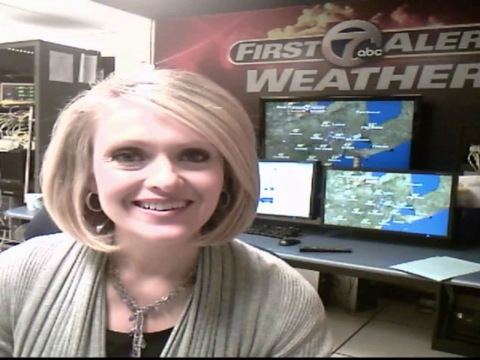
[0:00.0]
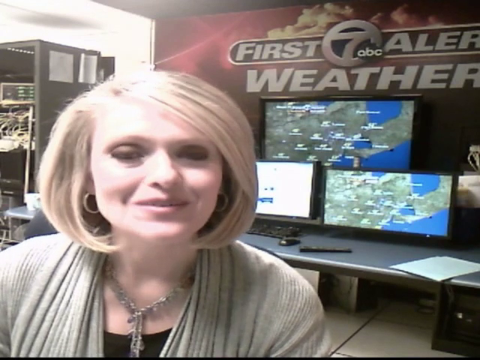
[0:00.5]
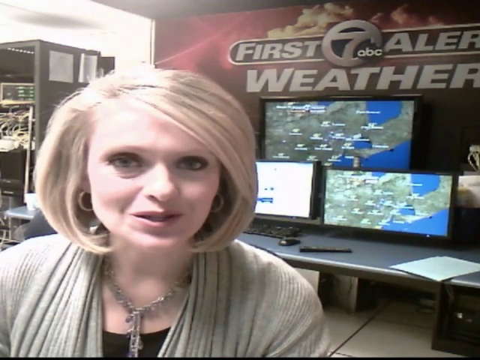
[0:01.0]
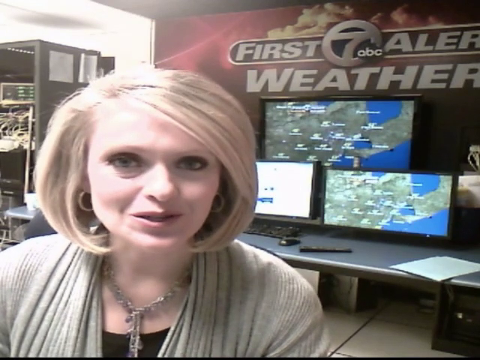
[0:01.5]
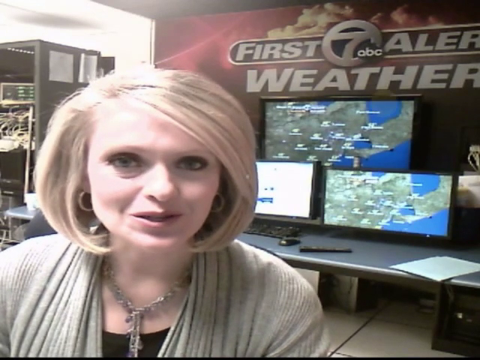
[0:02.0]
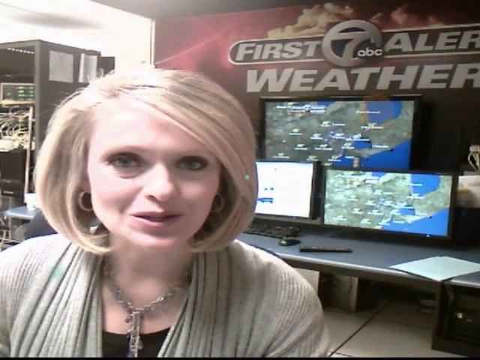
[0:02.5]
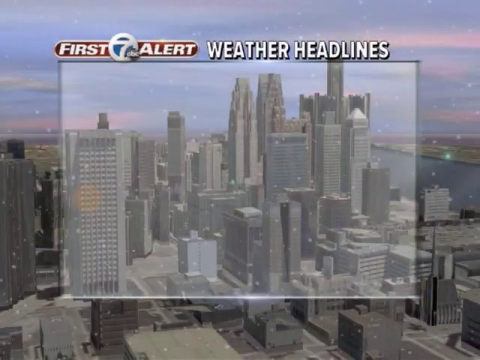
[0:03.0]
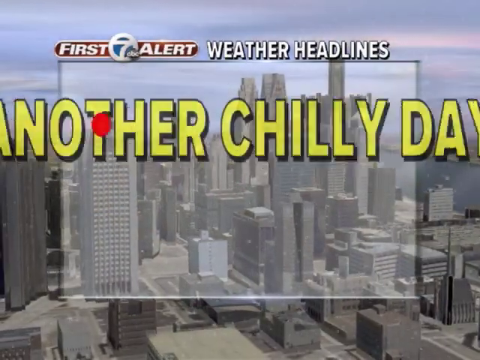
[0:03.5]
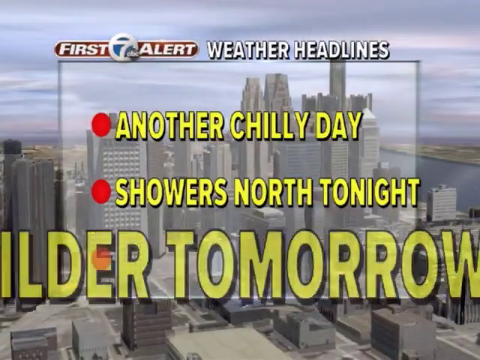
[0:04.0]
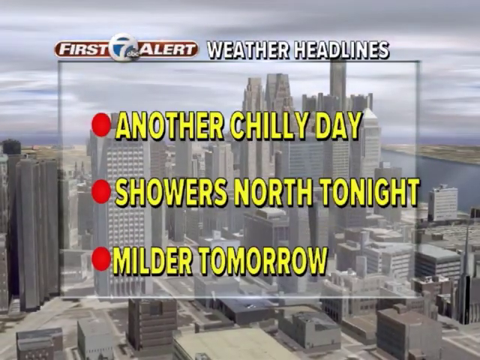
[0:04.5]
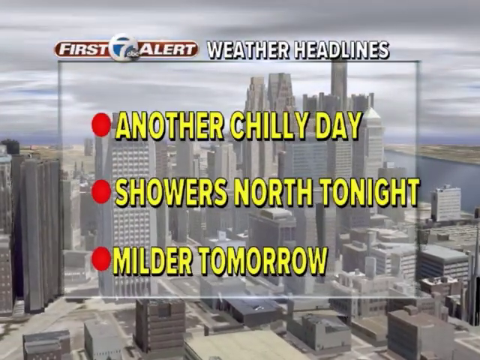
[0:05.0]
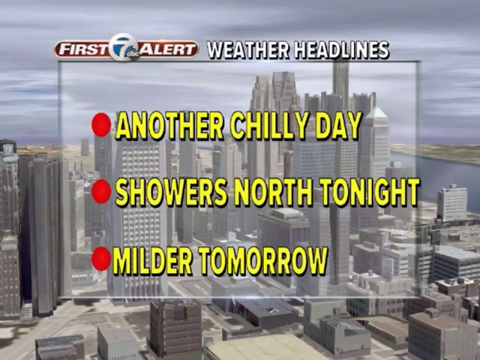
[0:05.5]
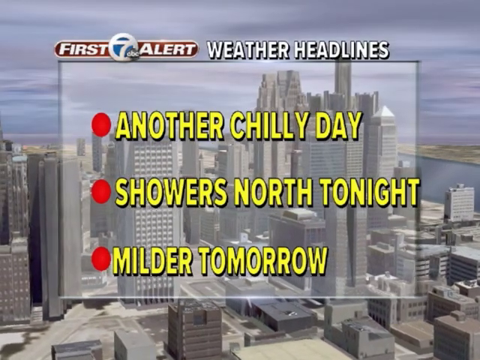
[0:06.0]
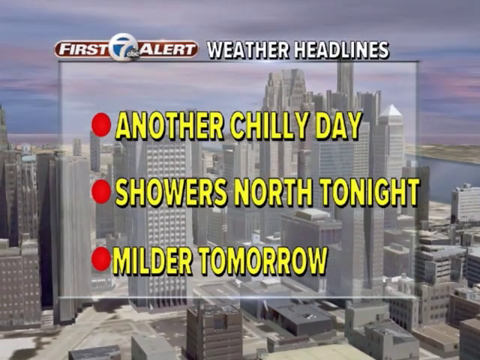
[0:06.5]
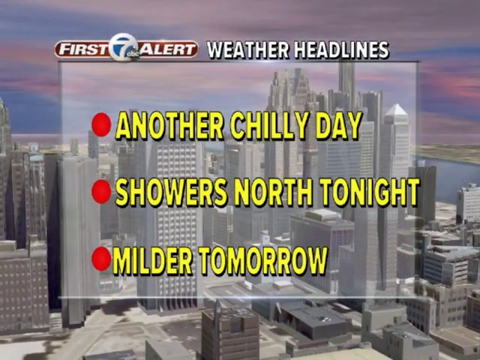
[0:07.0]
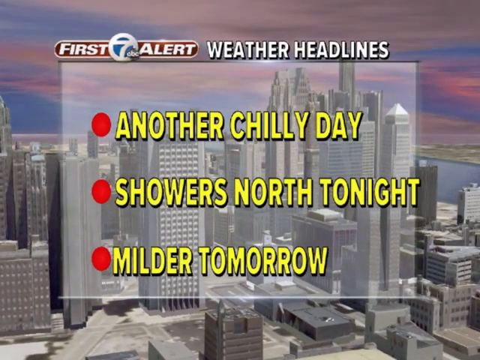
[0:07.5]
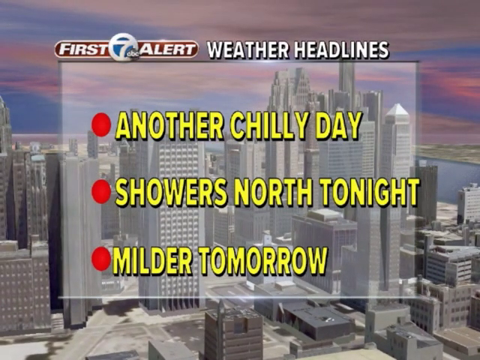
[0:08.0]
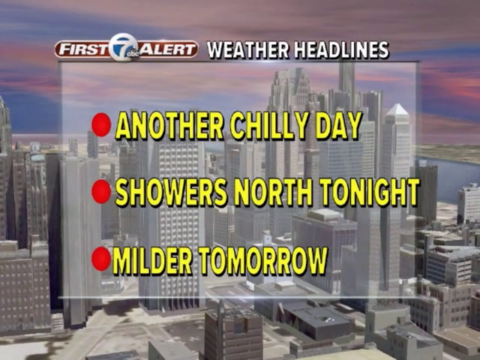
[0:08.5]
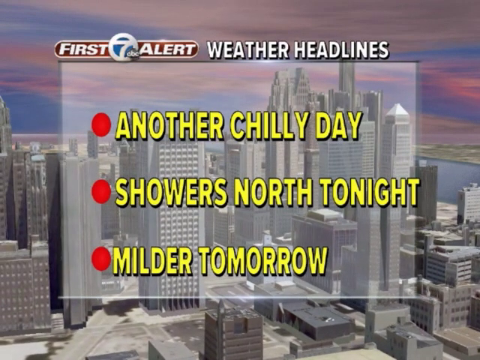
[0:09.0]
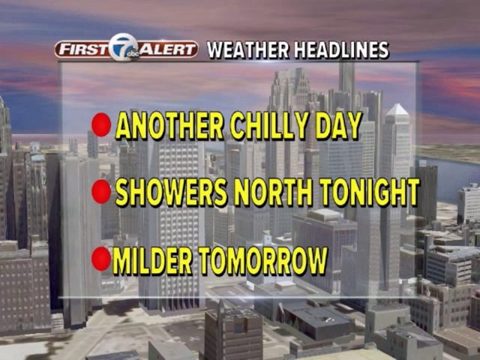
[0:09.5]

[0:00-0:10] This is a webcast of a show called First Seven Alerts, aired on ABC. It opens with a white woman giving an introduction to the program. She is smiling and appears happy. Behind her in the studio are screens showing more information. The video then transitions to weather headlines: "another chilly day", "showers north tonight" and "milder tomorrow". Behind the headlines are tall, modern high-rise buildings, suggesting the headlines are for a particular urban city.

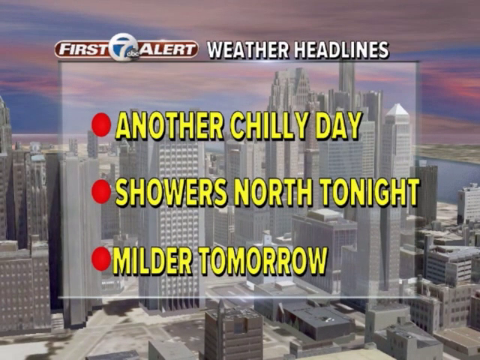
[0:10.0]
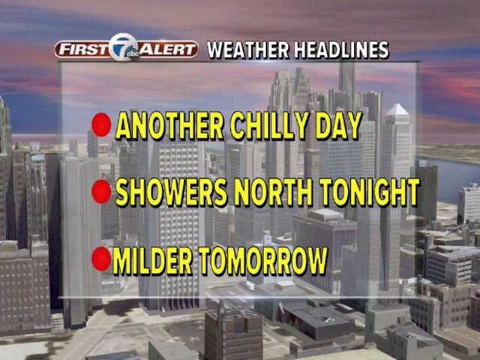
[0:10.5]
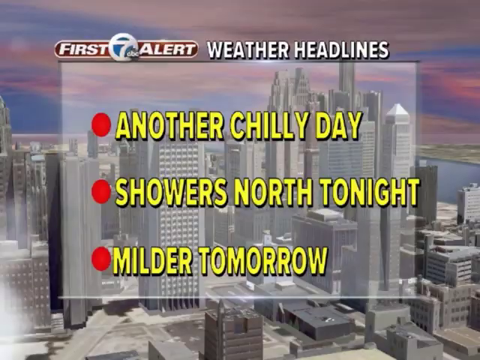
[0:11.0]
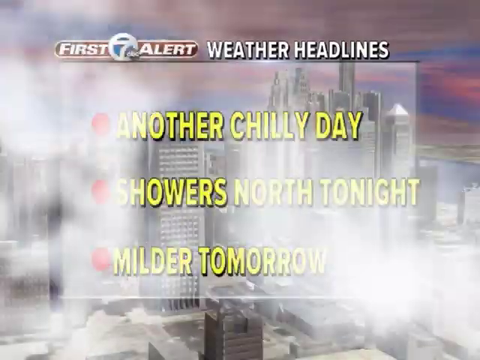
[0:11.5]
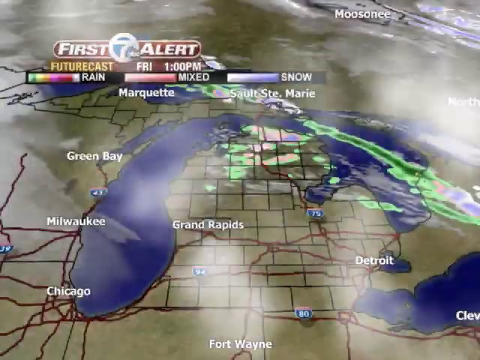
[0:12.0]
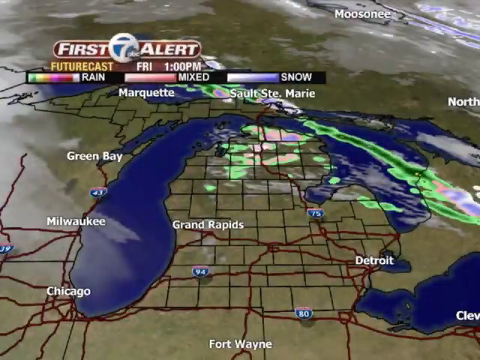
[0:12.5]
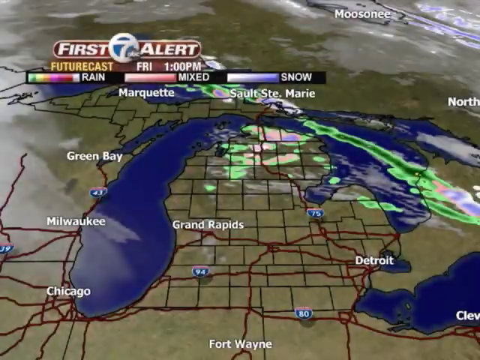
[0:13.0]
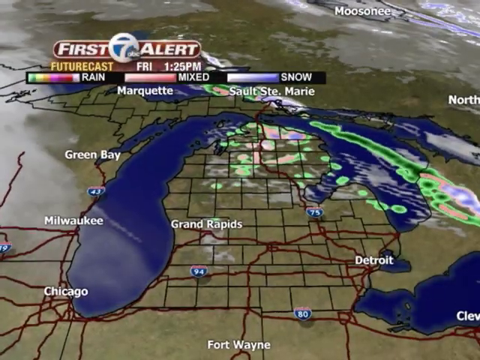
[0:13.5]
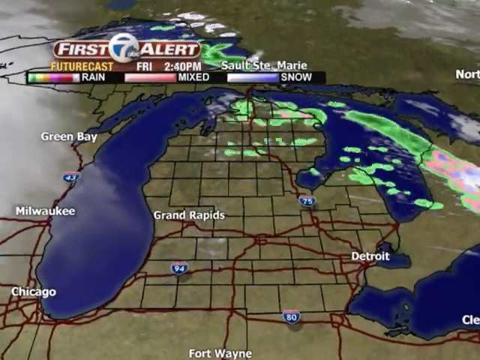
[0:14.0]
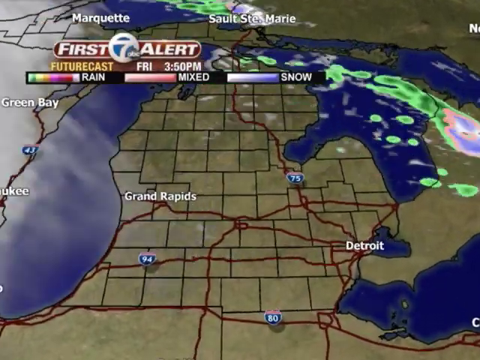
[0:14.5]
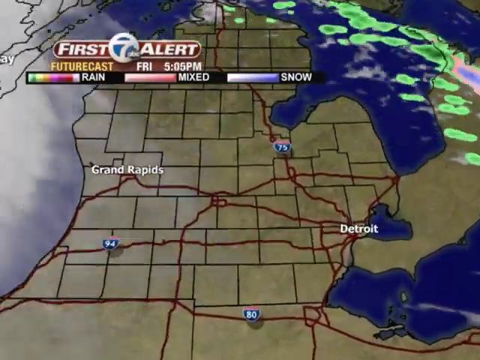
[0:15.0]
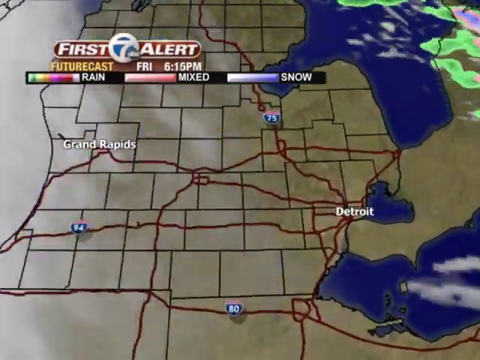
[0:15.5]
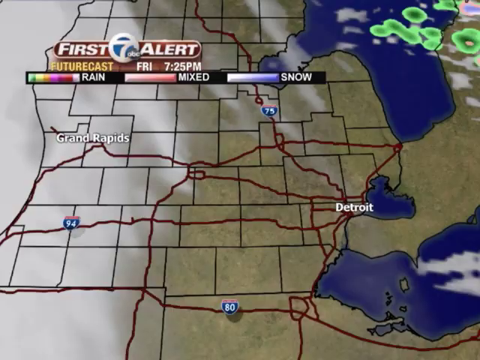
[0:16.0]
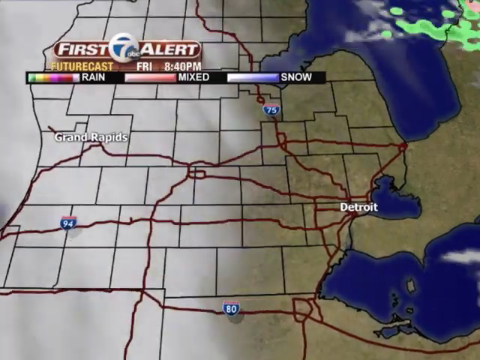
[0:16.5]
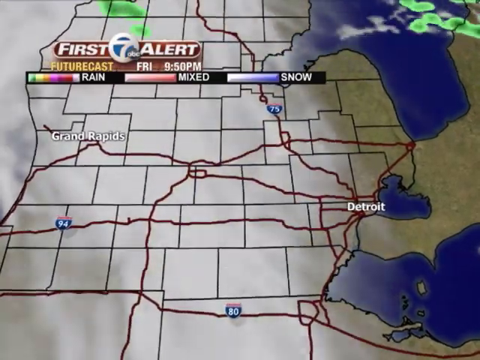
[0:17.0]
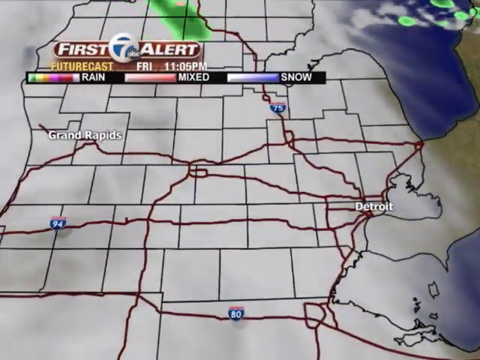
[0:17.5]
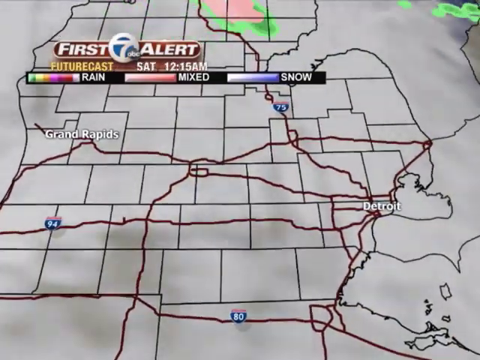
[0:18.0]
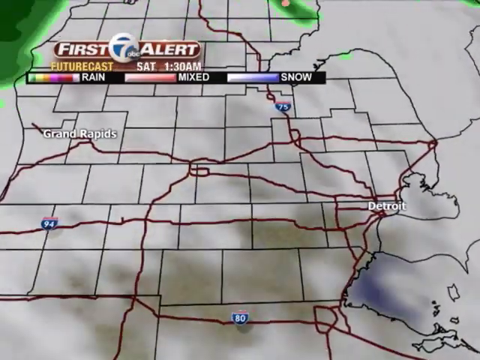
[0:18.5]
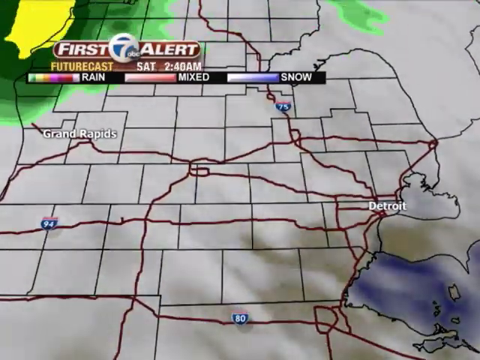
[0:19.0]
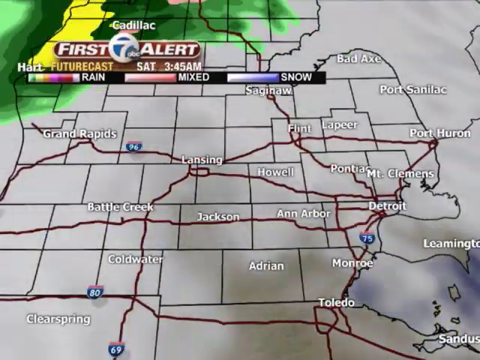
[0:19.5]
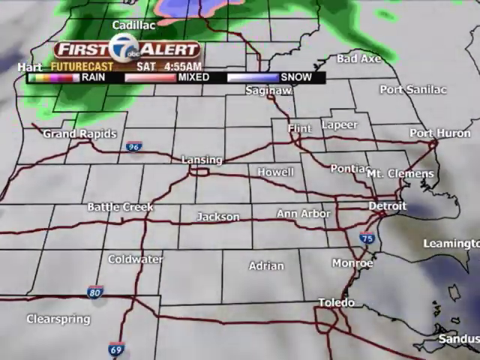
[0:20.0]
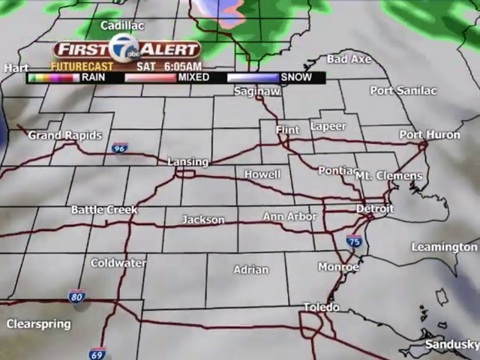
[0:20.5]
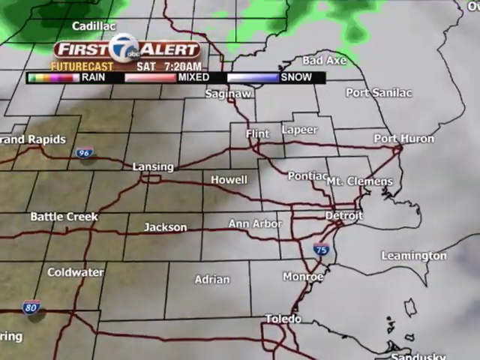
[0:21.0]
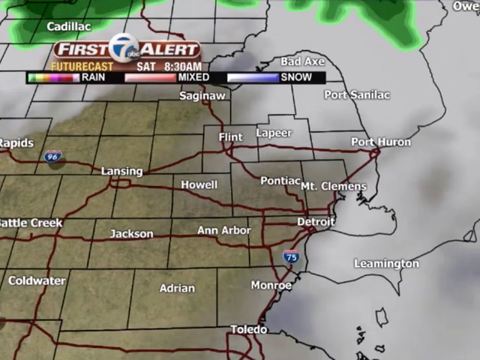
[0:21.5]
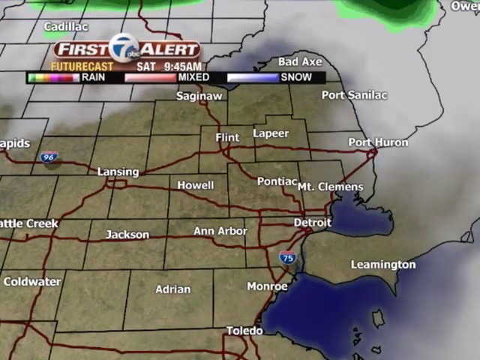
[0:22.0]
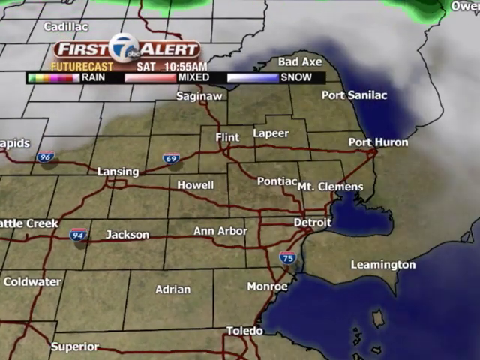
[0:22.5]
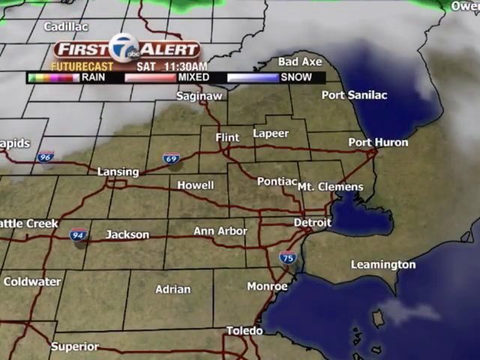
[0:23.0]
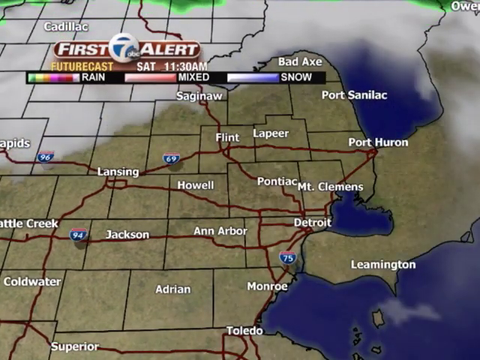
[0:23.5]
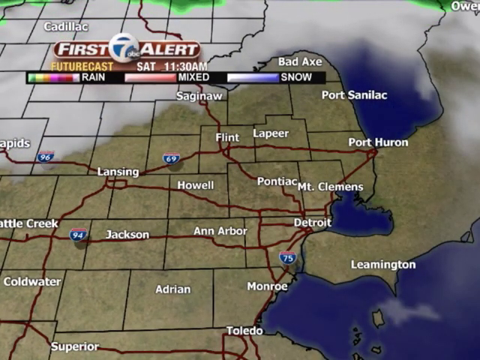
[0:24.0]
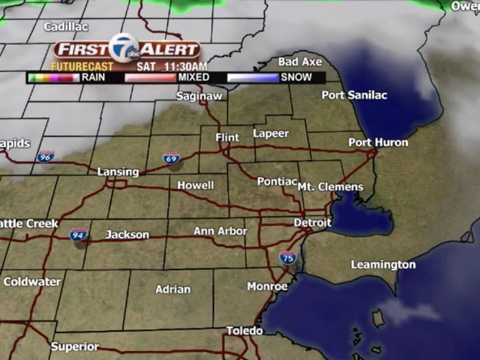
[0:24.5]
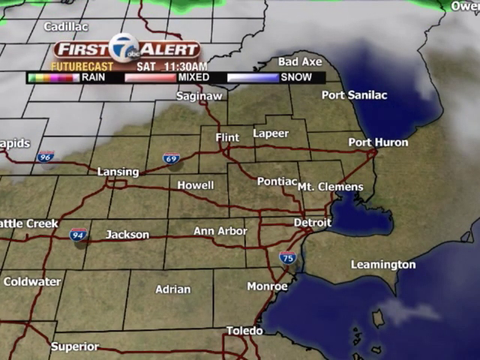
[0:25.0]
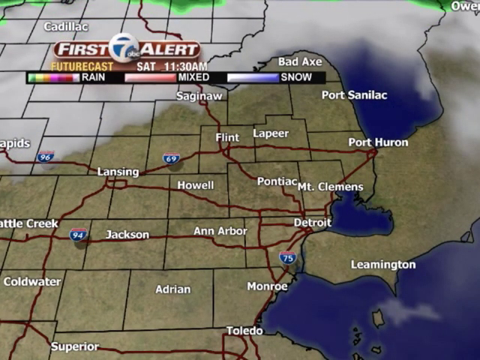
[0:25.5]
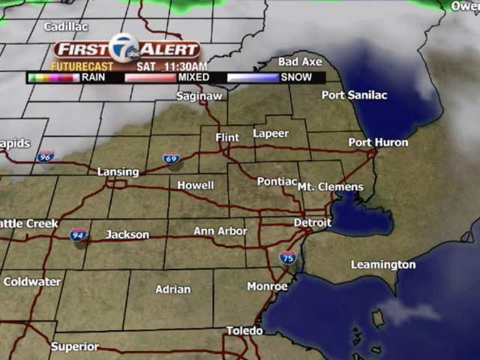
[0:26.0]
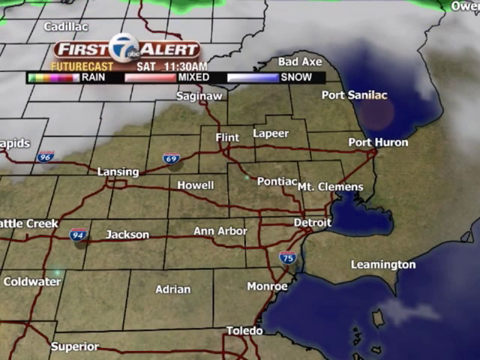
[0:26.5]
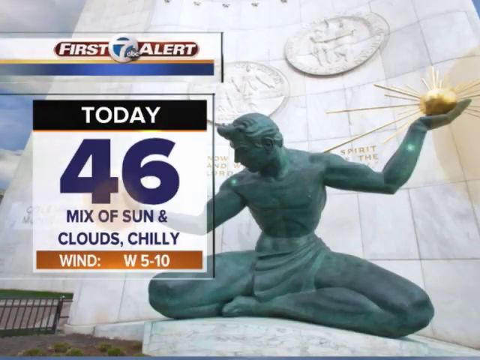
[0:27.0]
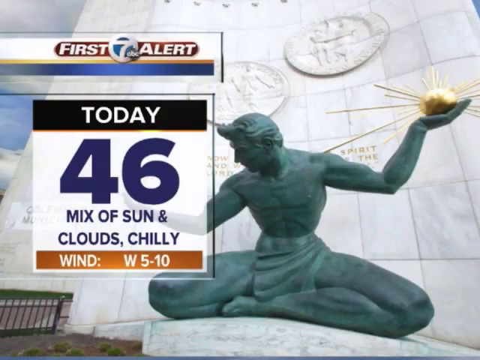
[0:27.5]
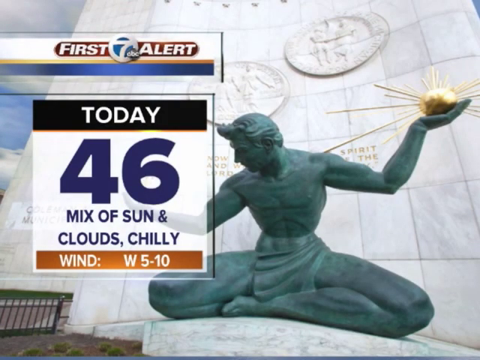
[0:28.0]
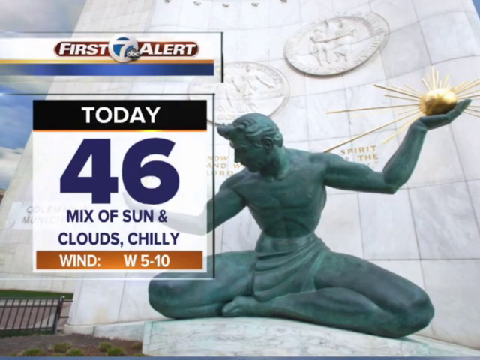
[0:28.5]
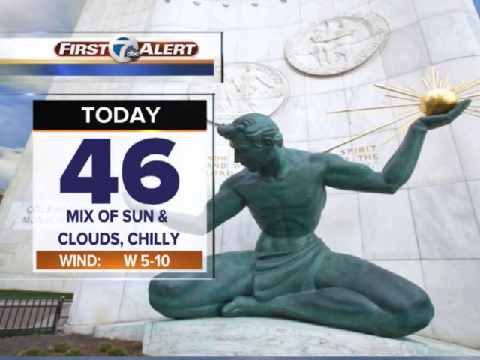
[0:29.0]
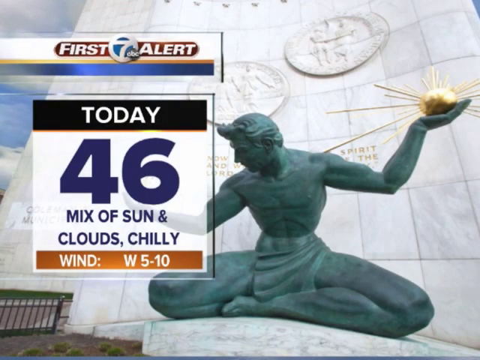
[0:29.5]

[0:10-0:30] This webcast of a news show called First Seven Alerts, shown on ABC, displays weather headlines: "another chilly day", "showers north tonight" and "milder tomorrow". Behind the headlines is a city of high-rise buildings, seemingly the urban setting the headlines refer to. The video then transitions to map graphics focused on the areas around Detroit. Each part of the map has its own colors, ranging from green to blue and pinkish, and the colors change over time. Cloud cover increases over time and moves from west to east, and a green shading also moves across the region. The segment concludes with a prediction that today's high will reach 46 degrees, with a mix of sun and clouds, and chilly.